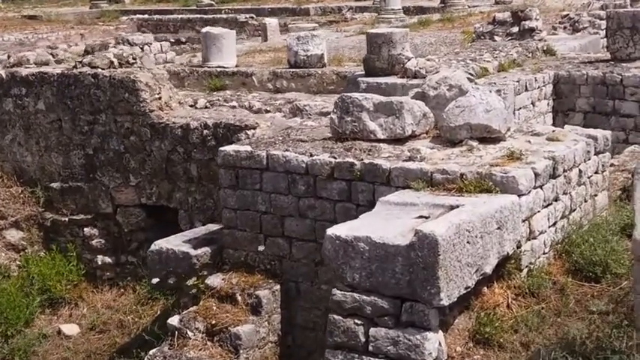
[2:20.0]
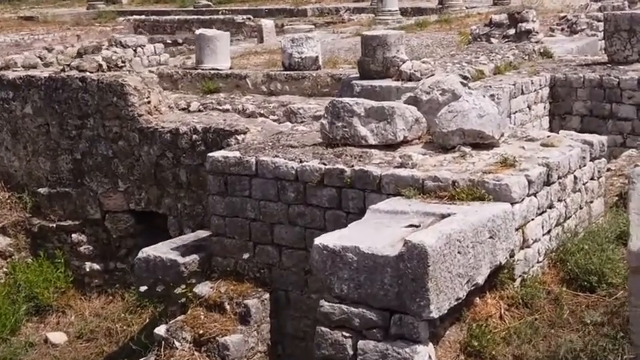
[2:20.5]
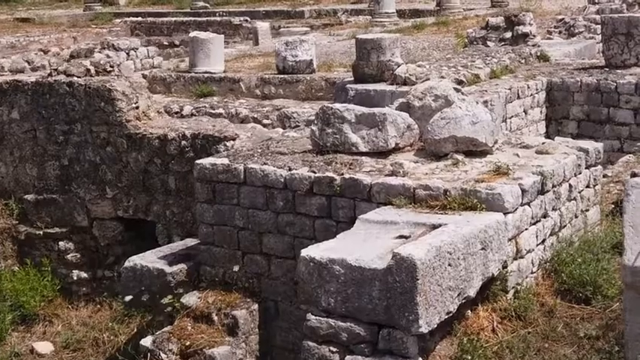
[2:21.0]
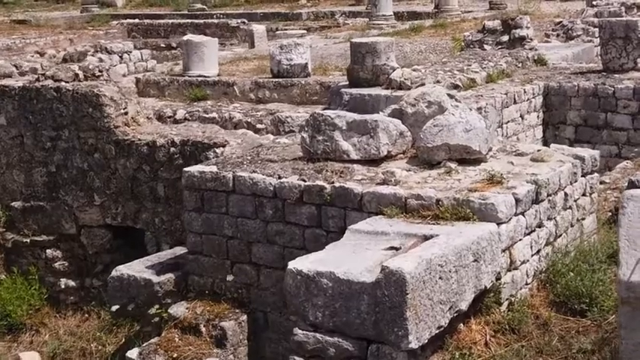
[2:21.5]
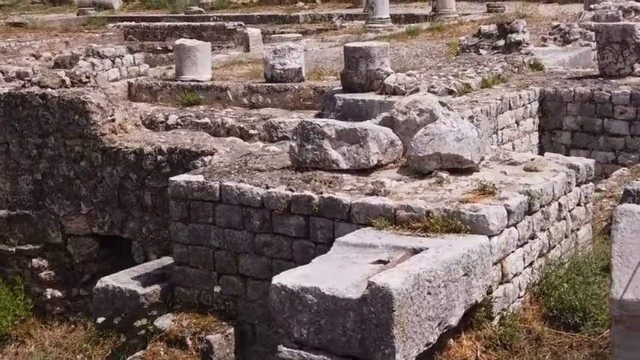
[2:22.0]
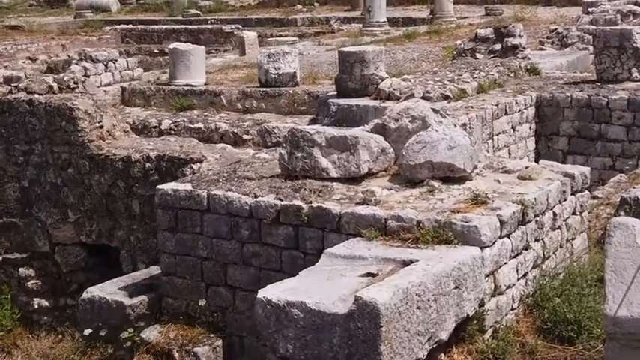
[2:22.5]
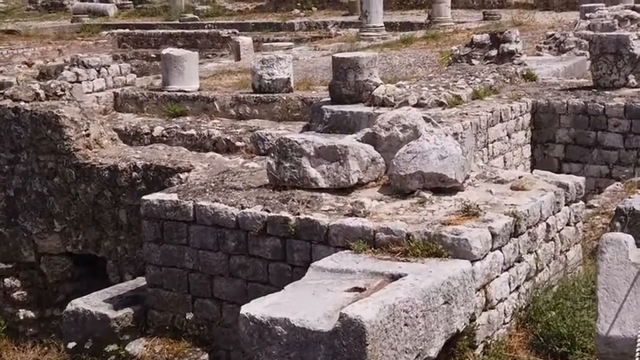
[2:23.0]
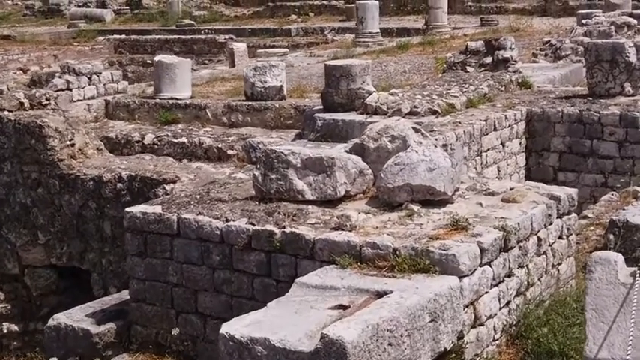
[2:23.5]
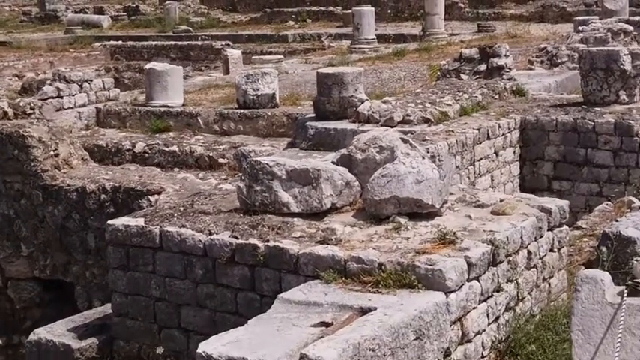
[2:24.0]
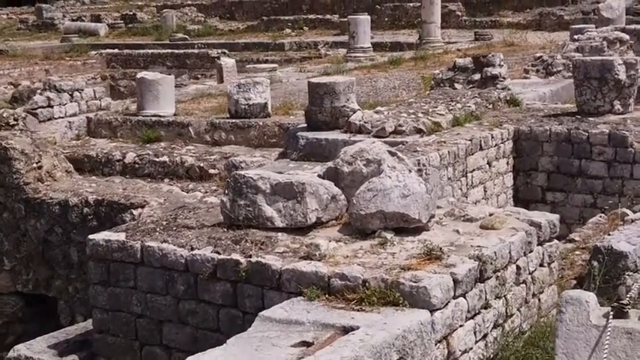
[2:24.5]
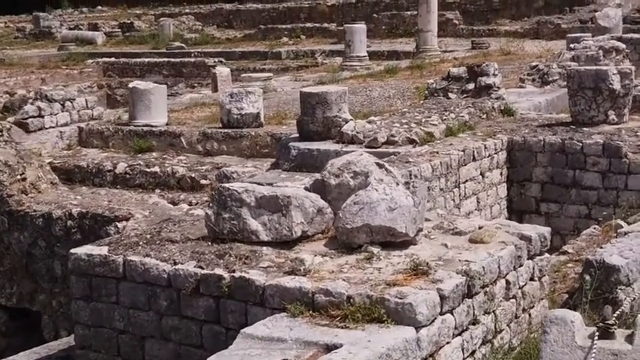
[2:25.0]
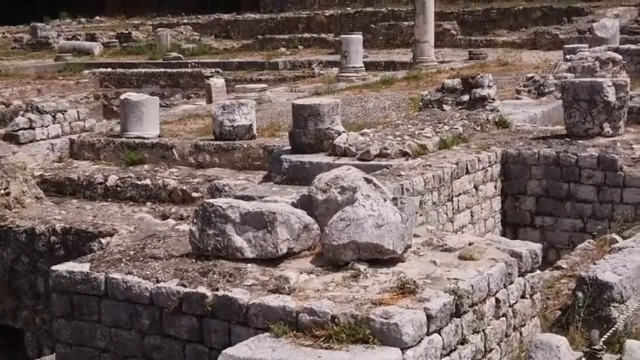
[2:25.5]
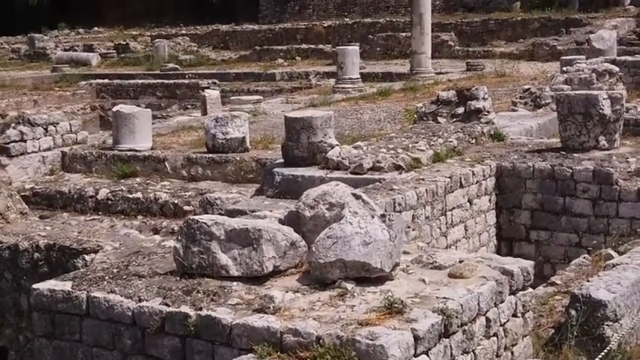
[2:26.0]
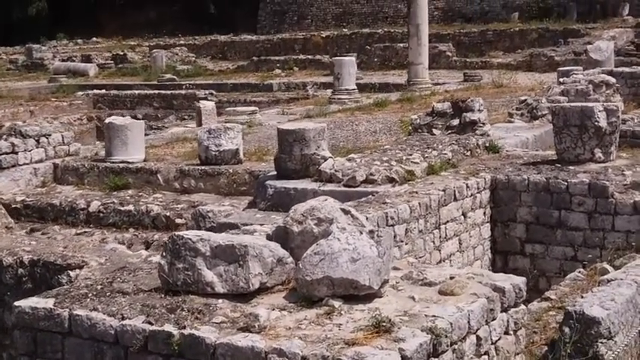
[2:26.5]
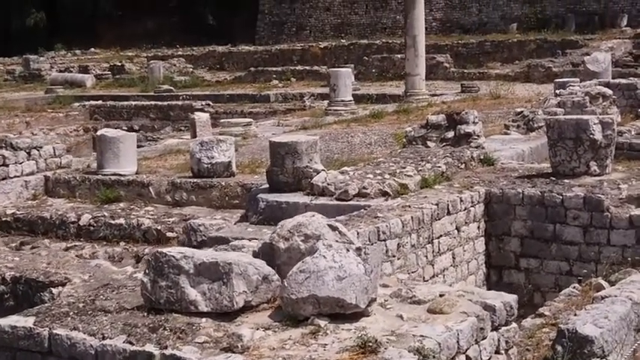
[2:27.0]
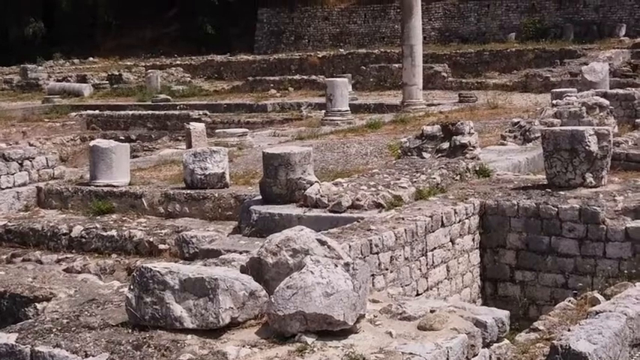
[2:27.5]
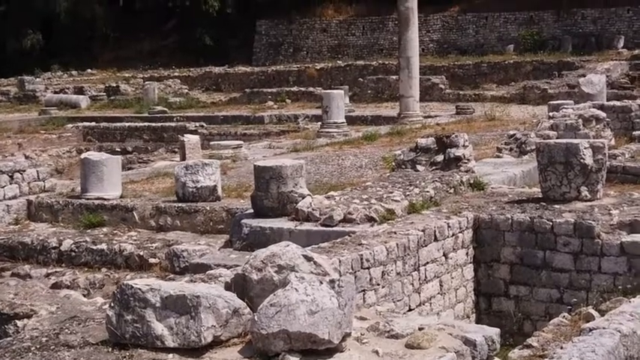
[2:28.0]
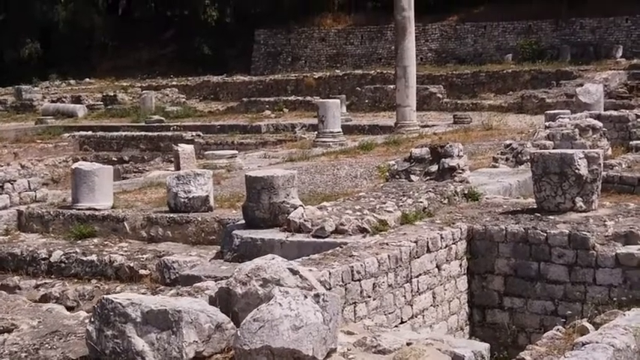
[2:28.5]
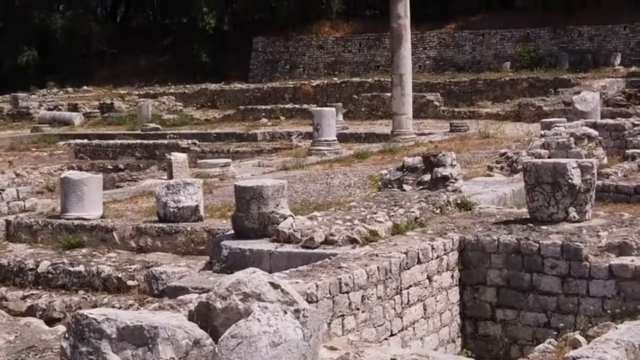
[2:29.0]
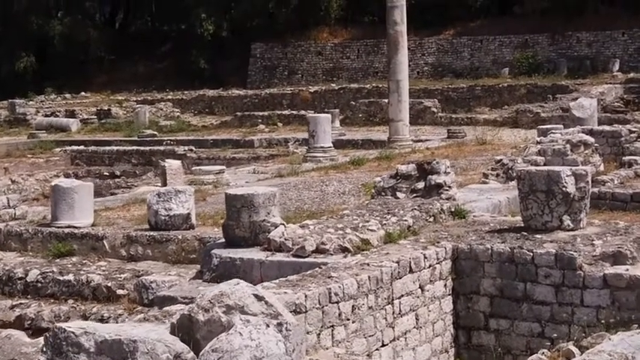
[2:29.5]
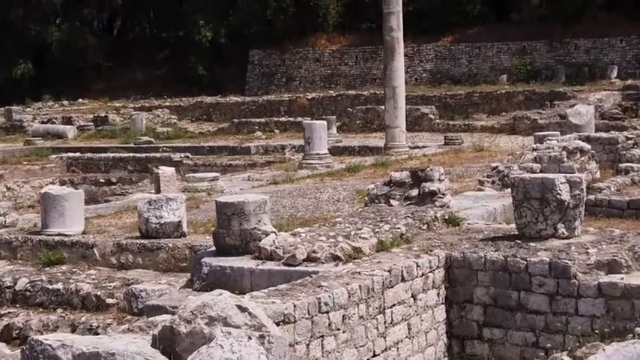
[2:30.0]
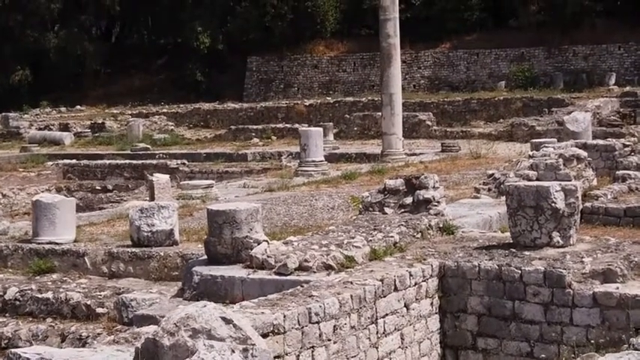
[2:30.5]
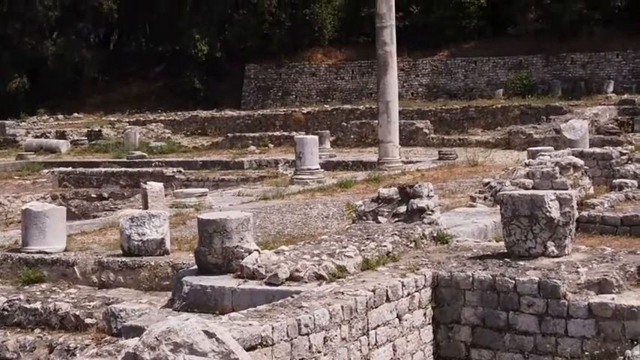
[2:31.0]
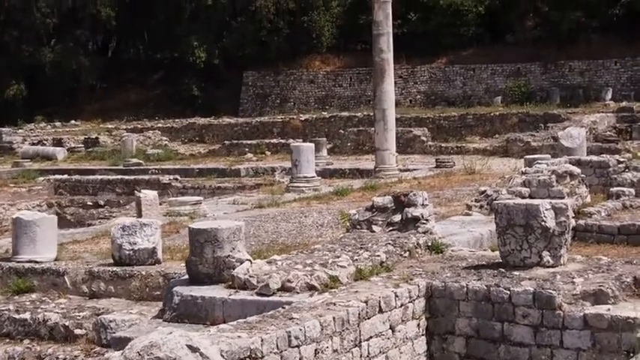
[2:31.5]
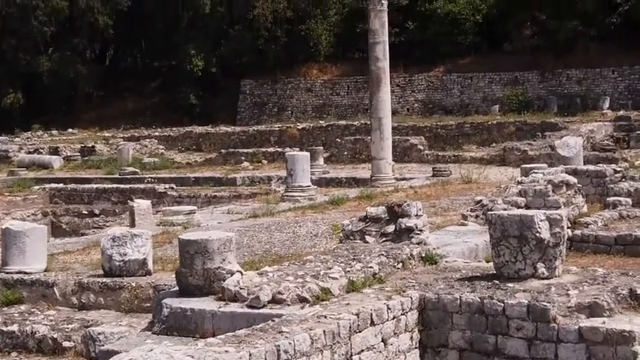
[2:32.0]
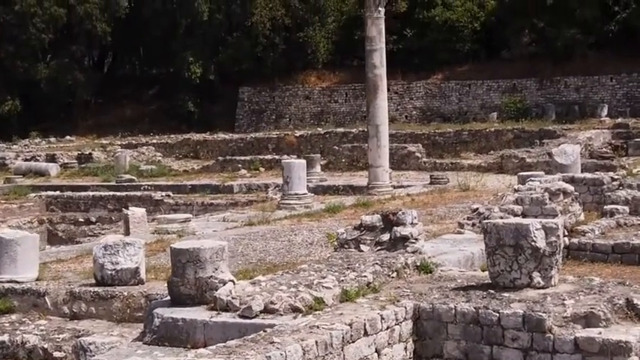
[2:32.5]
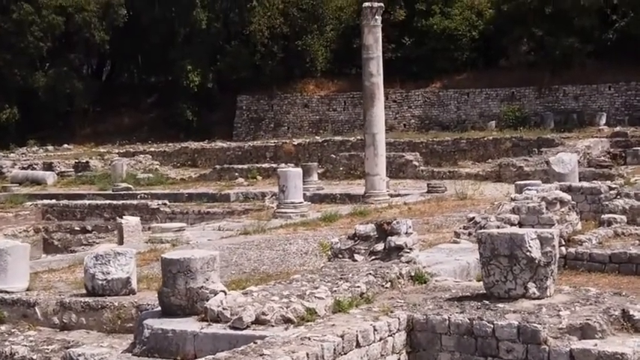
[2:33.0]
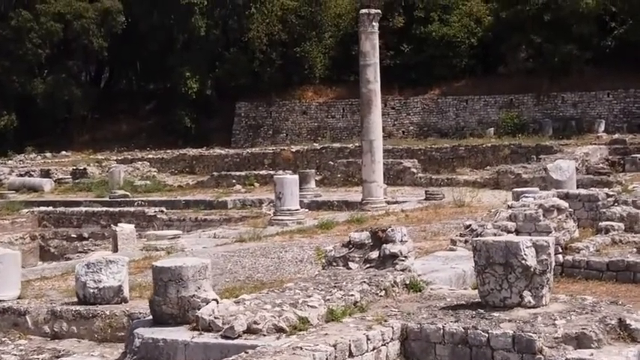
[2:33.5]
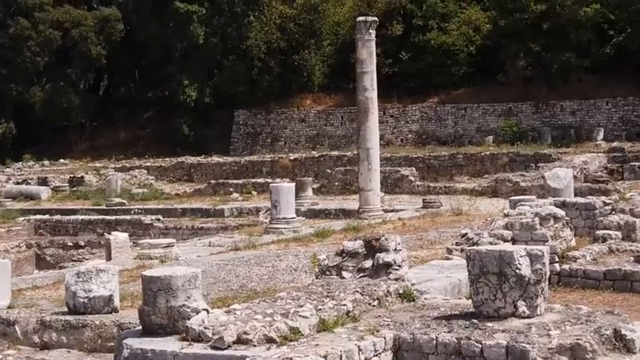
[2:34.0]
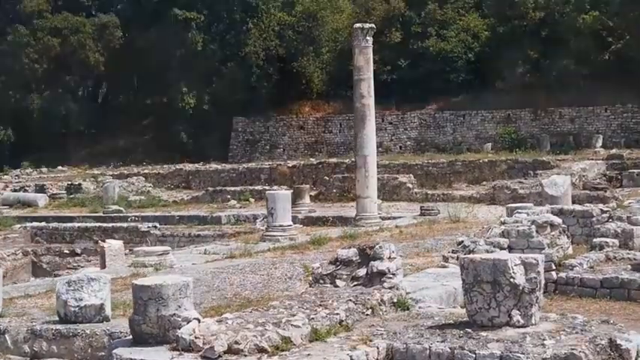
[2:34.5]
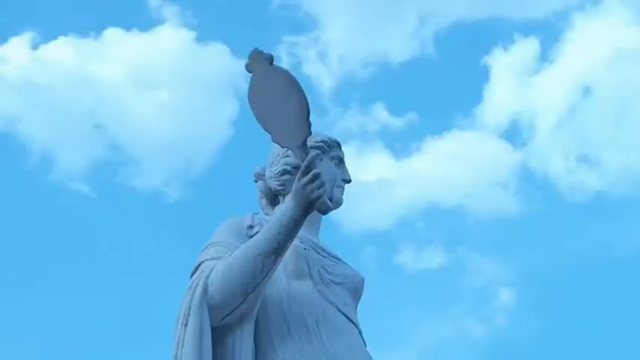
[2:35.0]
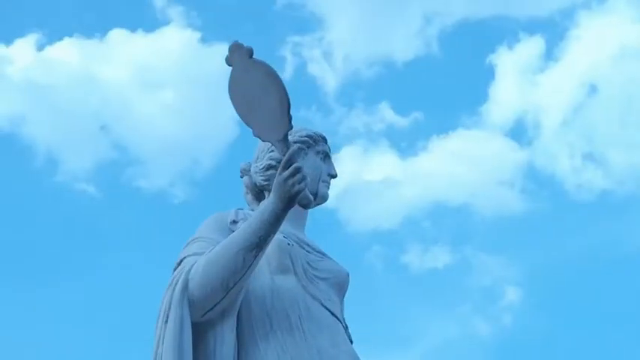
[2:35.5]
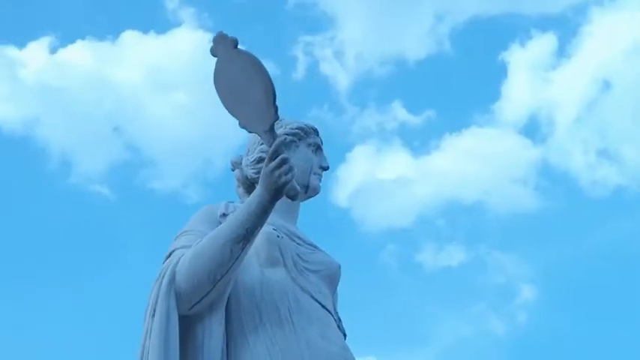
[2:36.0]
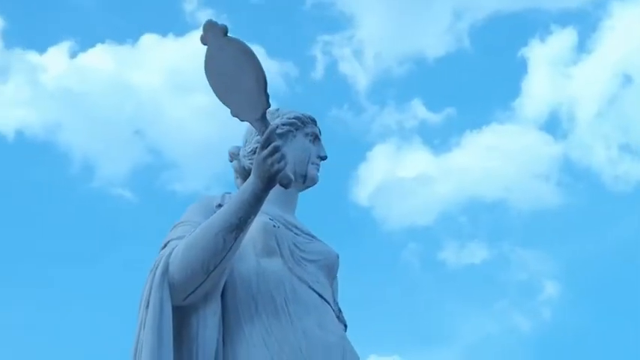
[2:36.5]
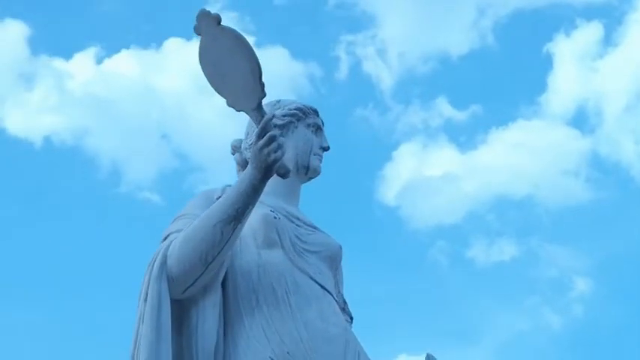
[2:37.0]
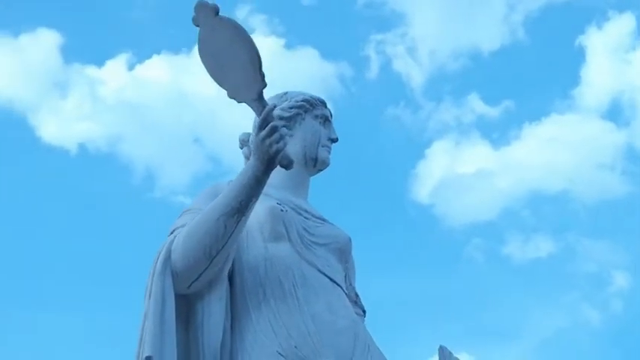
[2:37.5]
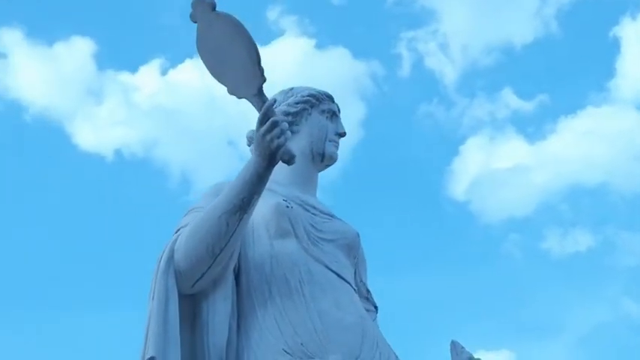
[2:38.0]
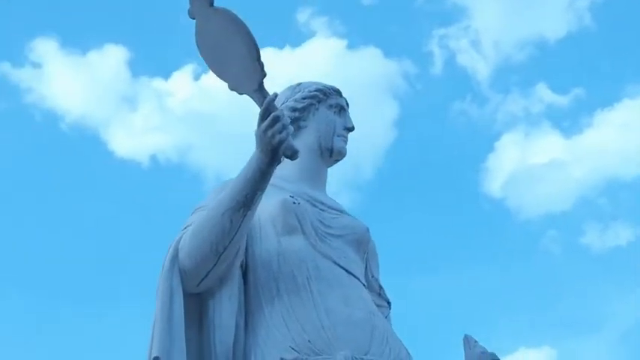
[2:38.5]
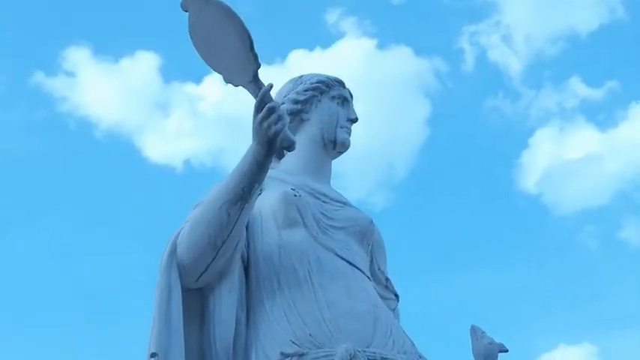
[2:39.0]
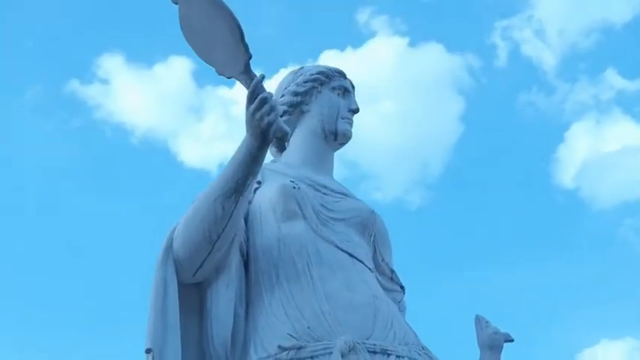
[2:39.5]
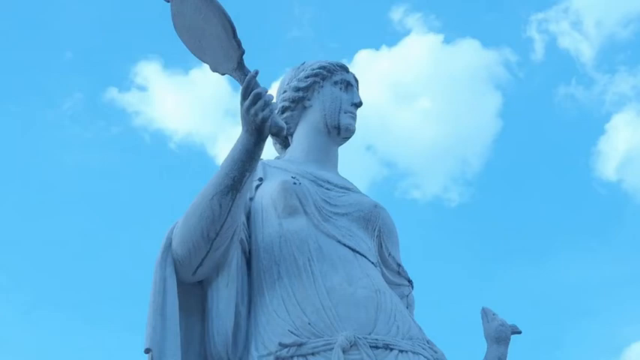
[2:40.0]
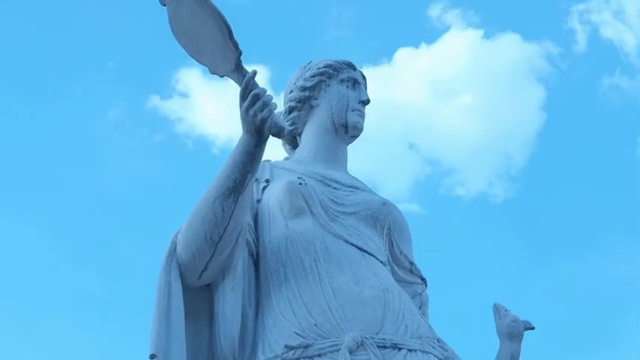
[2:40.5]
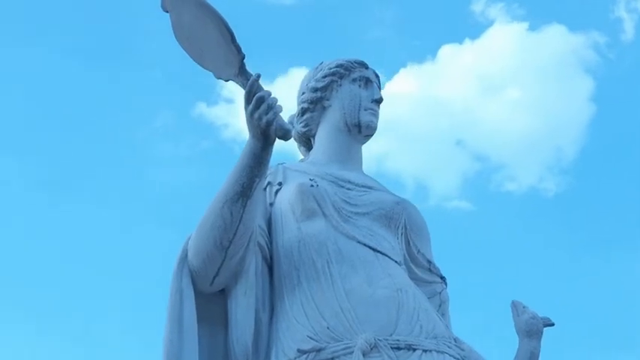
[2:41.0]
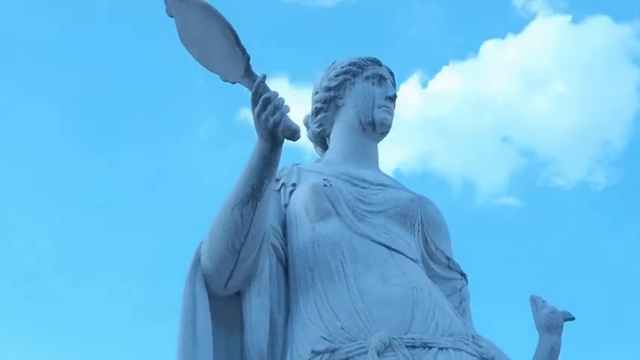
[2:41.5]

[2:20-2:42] The camera slowly pans across a ruined site from ancient Greece or ancient Rome. One Corinthian column is left intact, while the rest have been cut down to about calf height. Loose rocks are placed on the leftover foundations of what was once a large building. The footage then cuts to an outdoor marble statue of a woman with wavy hair, holding a hand mirror in her right hand and looking towards the left. She wears draped robes, and the outlines of her figure are visible beneath the clothing. A black stain on the right side of her face looks like two large black streaks across the alabaster colour of the marble. Behind the statue is a blue sky with clouds.